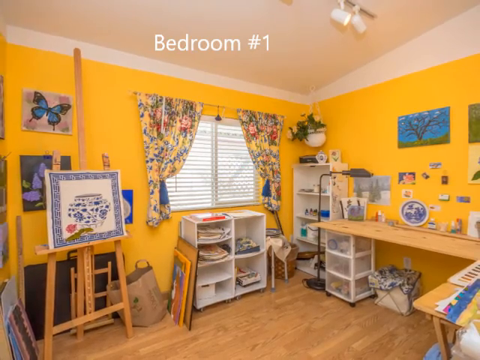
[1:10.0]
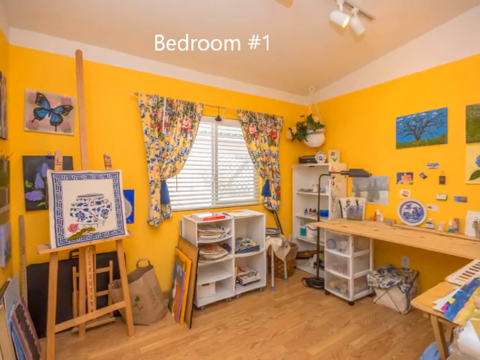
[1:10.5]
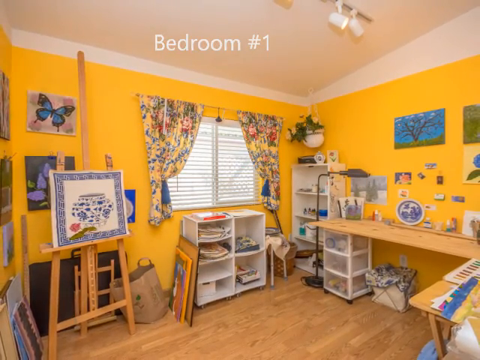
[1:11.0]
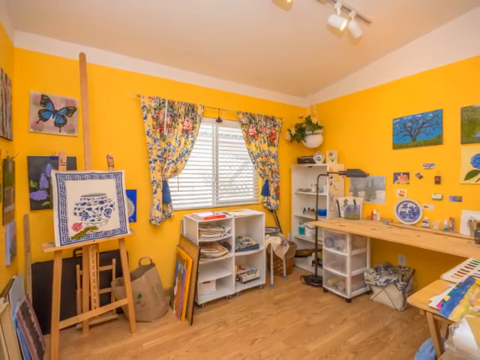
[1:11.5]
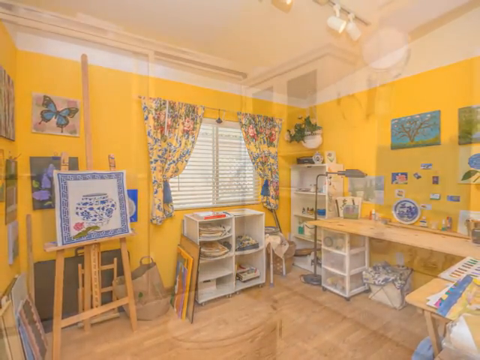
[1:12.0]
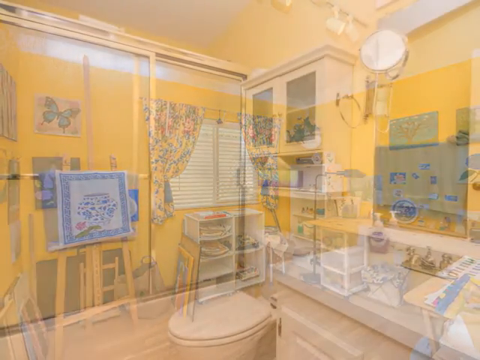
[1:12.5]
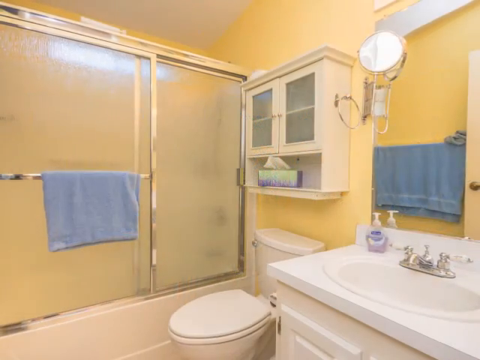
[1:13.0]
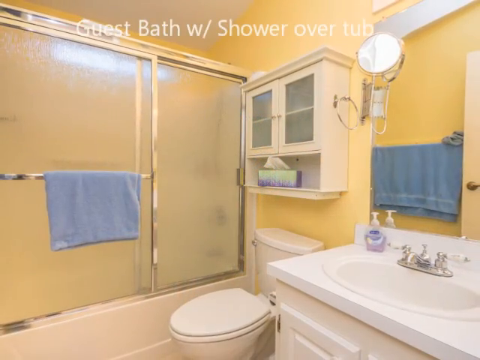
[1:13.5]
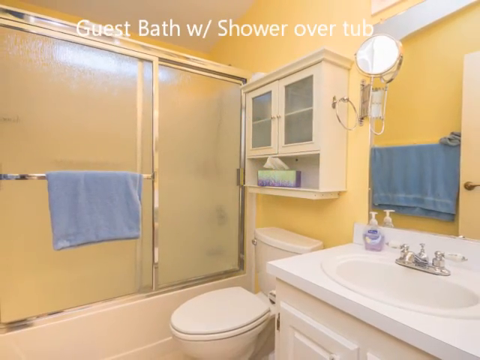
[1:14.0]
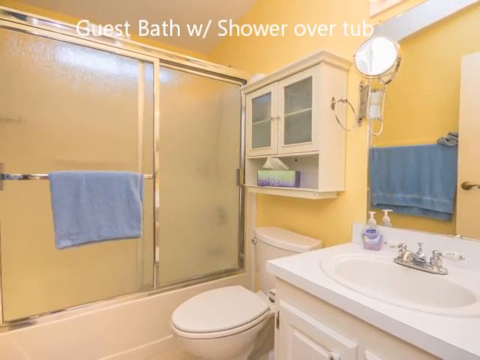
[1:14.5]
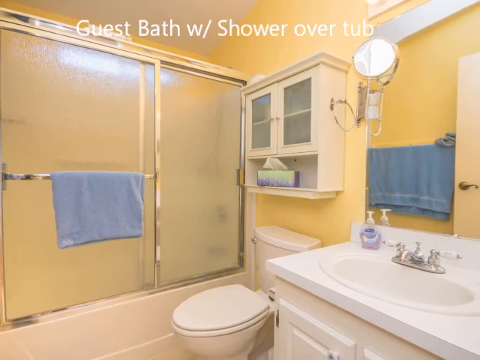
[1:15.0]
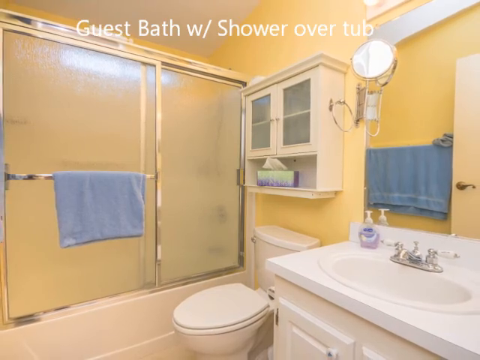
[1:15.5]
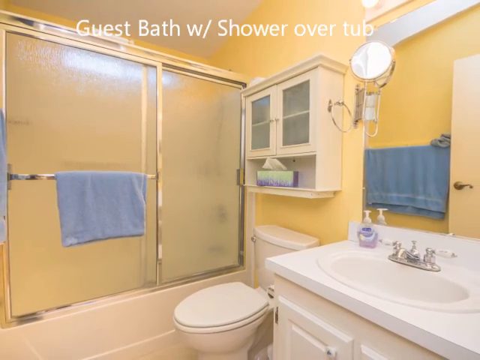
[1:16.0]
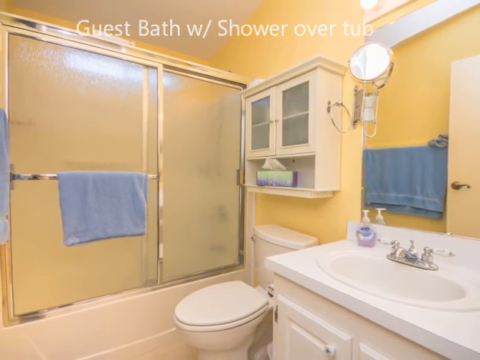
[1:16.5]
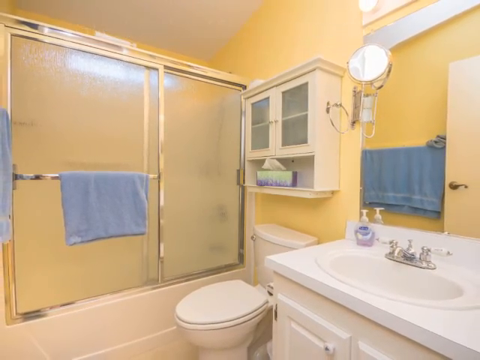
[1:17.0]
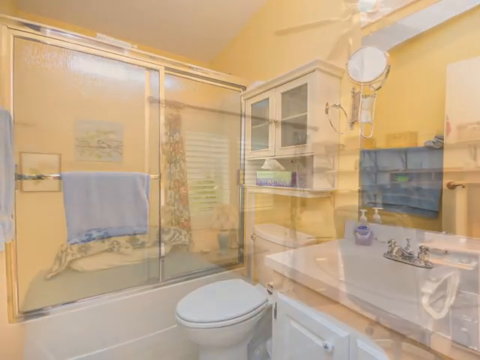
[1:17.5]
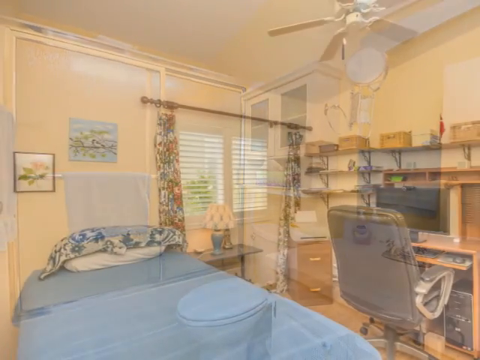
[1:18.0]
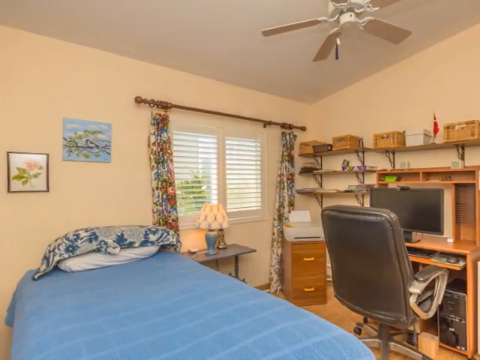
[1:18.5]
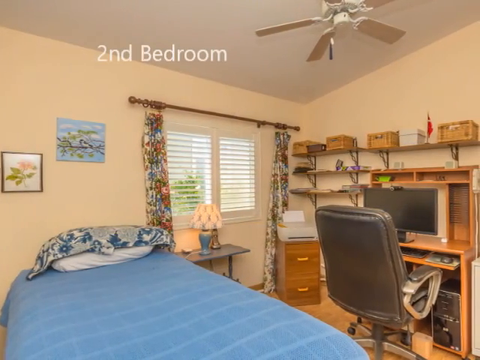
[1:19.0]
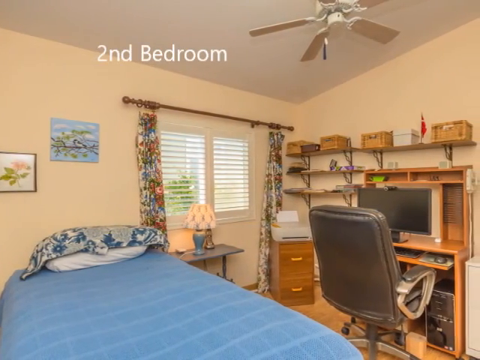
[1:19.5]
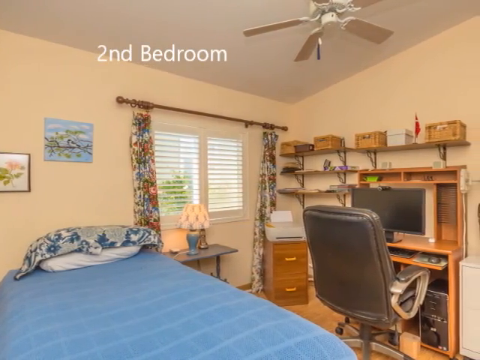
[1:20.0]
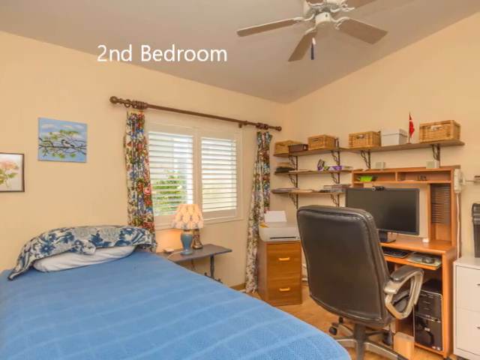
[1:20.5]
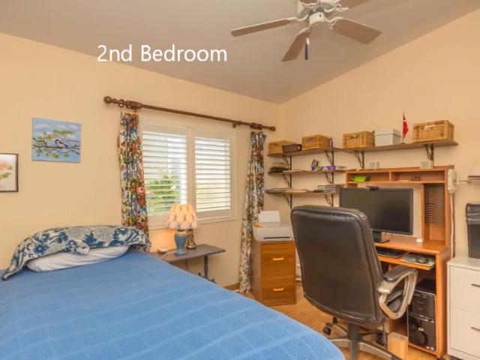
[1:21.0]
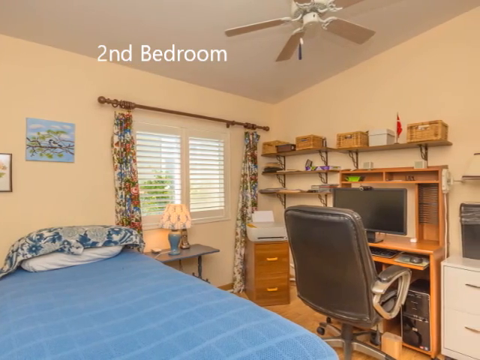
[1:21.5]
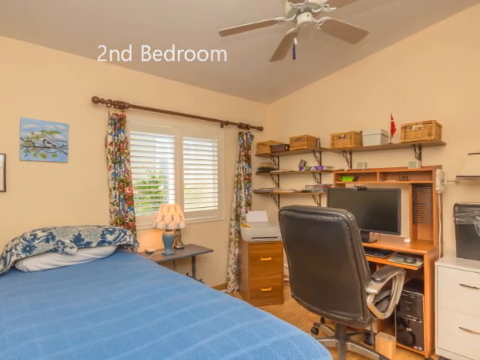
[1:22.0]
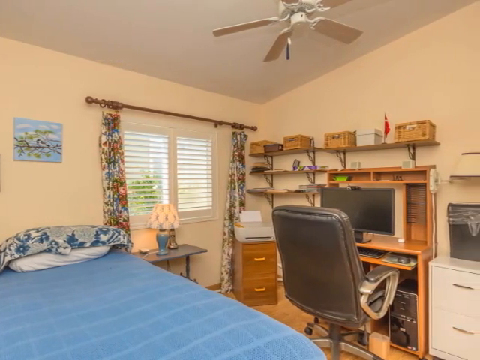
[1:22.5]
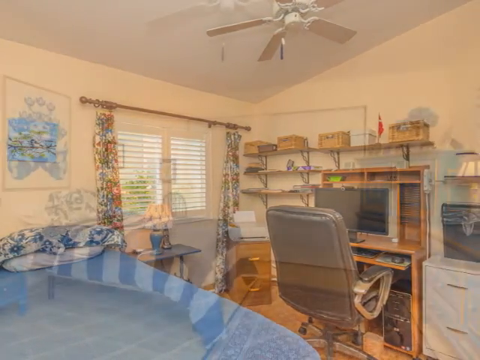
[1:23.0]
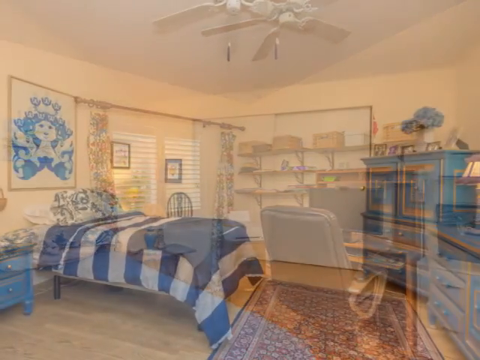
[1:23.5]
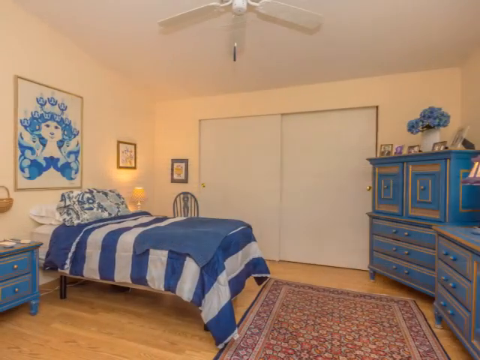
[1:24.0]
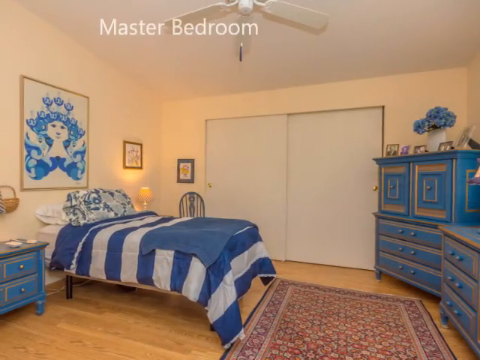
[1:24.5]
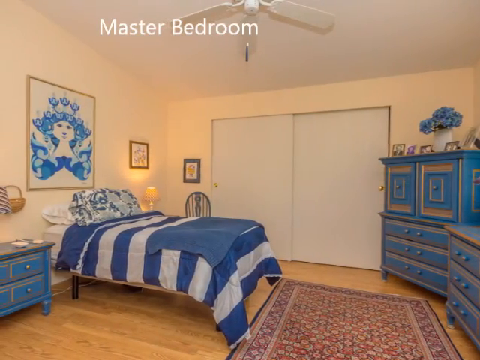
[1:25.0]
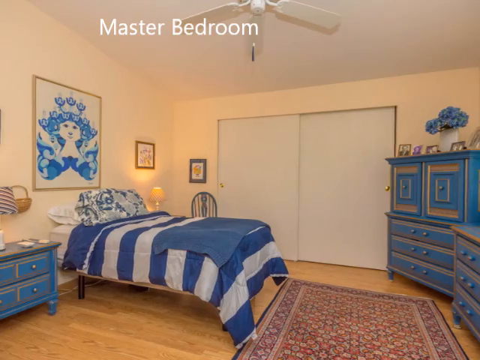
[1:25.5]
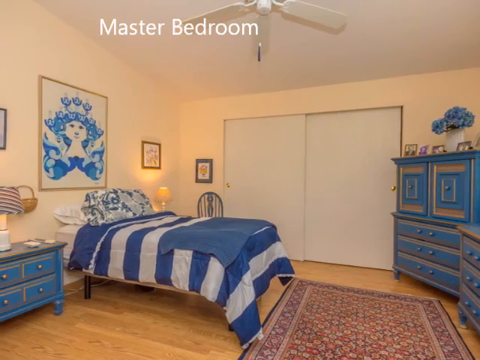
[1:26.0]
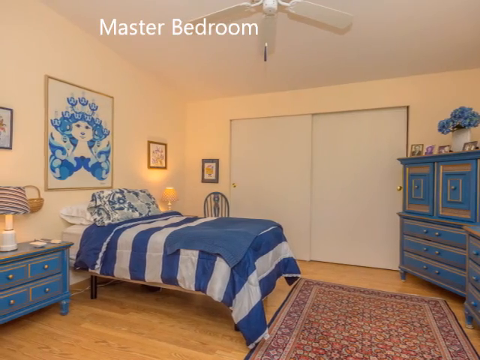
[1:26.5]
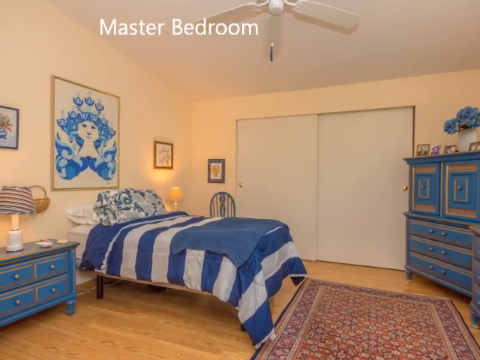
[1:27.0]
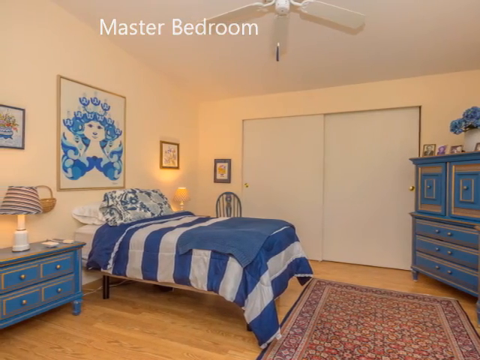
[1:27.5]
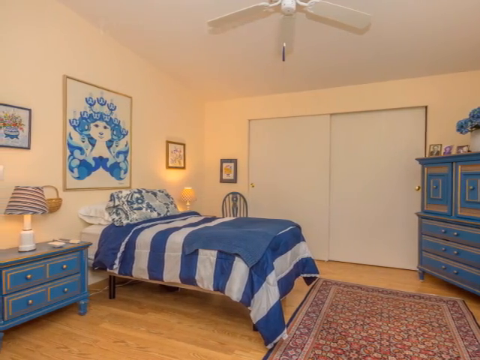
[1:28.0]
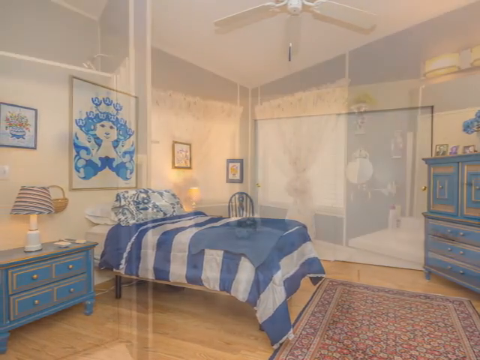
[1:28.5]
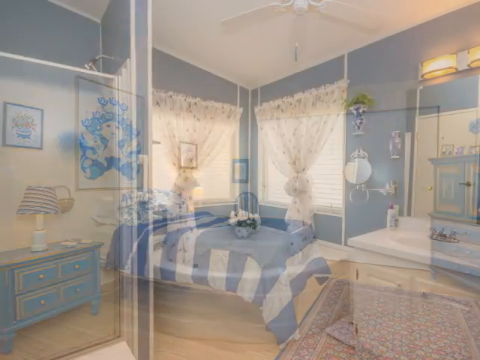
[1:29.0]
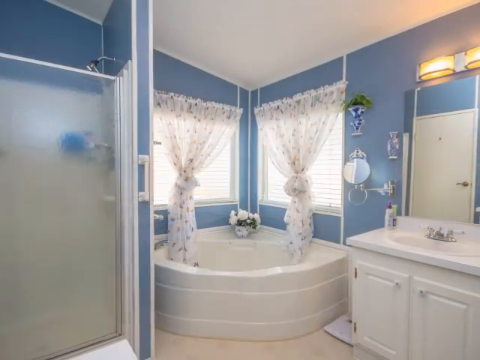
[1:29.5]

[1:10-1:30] Inside the mobile home, the guest bathroom has a shower over a tub. It is not a double sink; it appears to be a smaller sink with a mirror above it, and there is a small cabinet above the toilet. The toilet is white, the tub is white, and there are glass doors on the shower-tub area. The camera zooms in and out around the bathroom, then moves to the second bedroom, which appears to have a twin bed, along with a desk. Next is the master bedroom, where there look to be sliding doors into a closet; the room seems rather large, possibly able to fit a queen or king size bed. The master bathroom has a large tub sitting in a corner with two windows above it, a white sink with a white countertop, a mirror in the background, and a shower area. The master bathroom appears painted a light blue and does not look like it needs a new paint job. The master bedroom is quite large, and in the bathrooms white lines are visible where the building was put together.